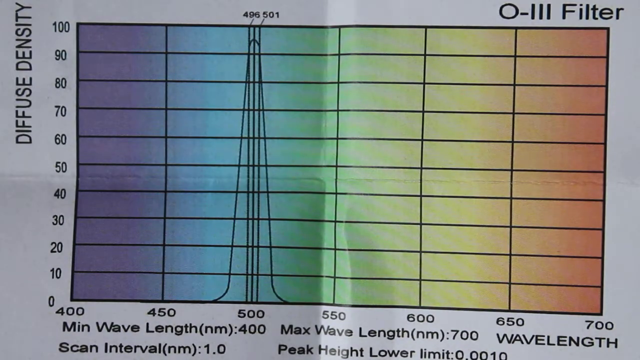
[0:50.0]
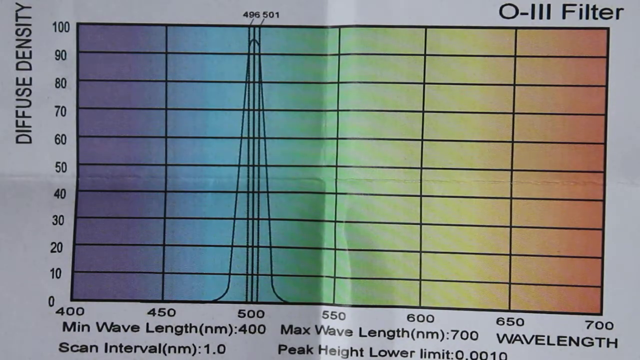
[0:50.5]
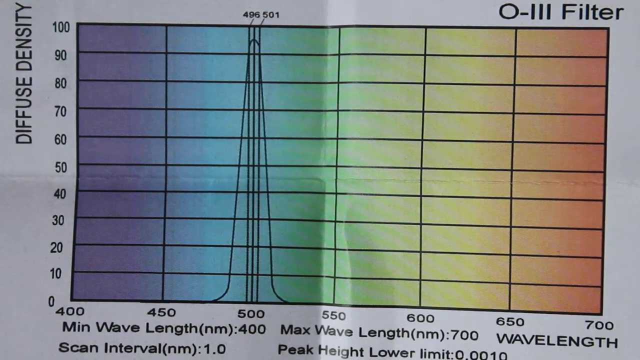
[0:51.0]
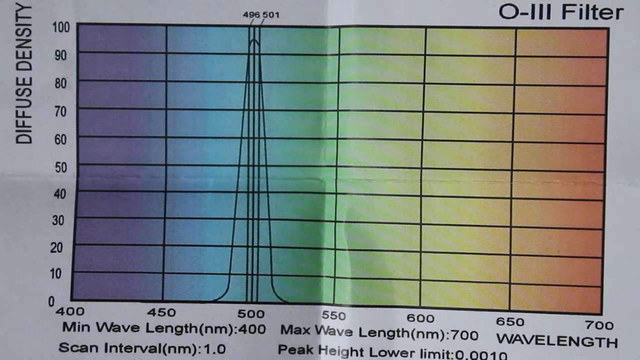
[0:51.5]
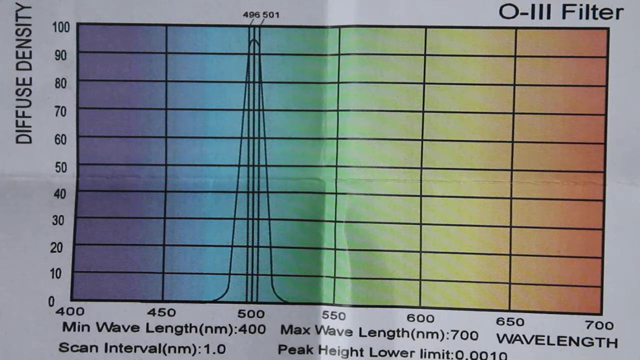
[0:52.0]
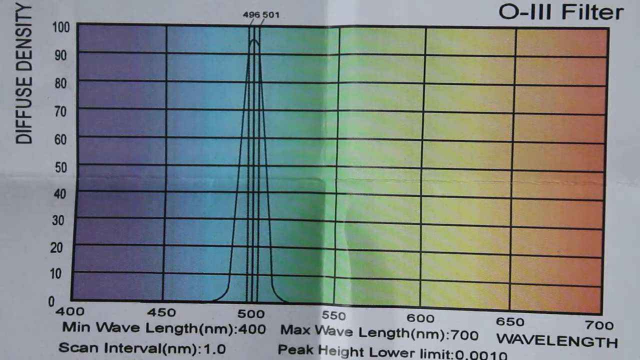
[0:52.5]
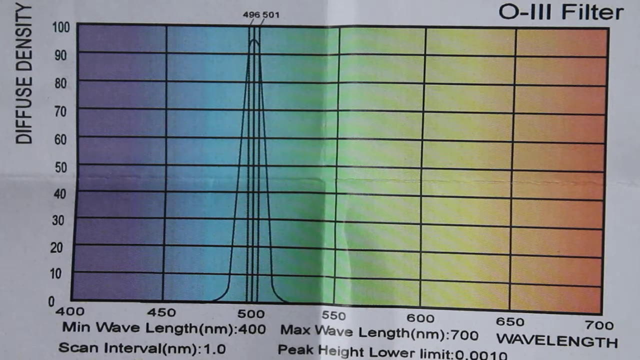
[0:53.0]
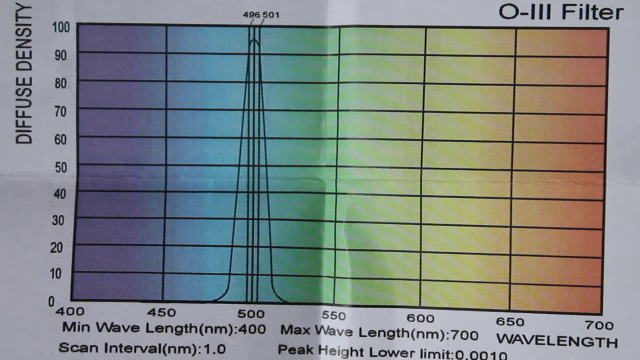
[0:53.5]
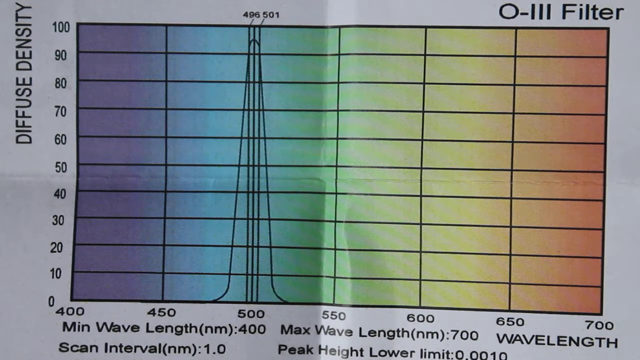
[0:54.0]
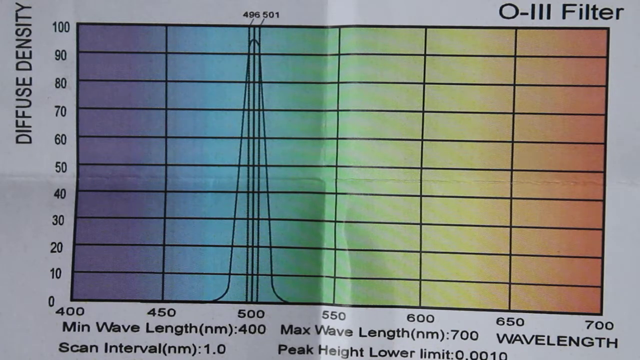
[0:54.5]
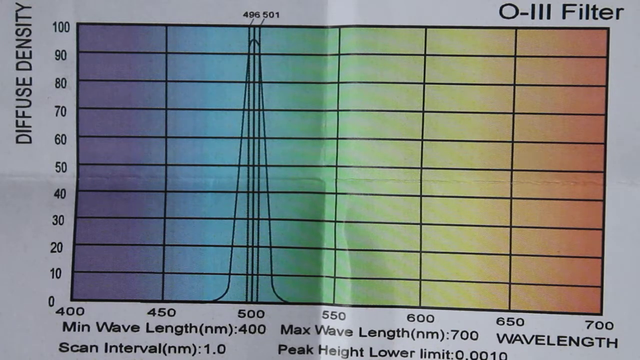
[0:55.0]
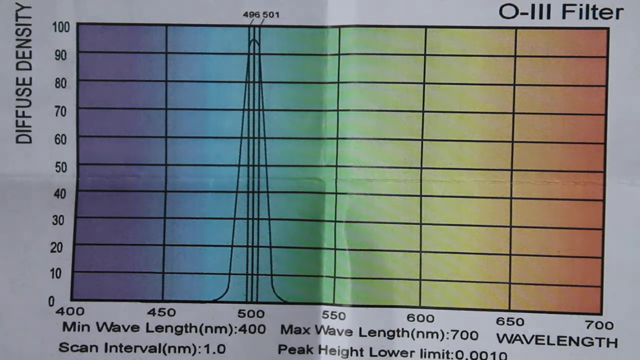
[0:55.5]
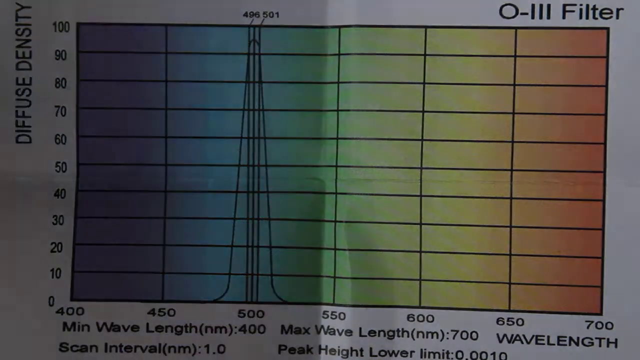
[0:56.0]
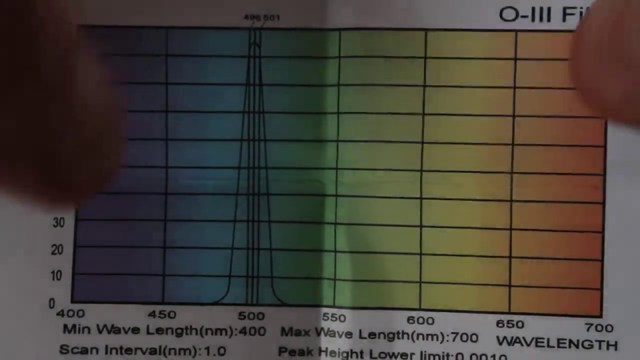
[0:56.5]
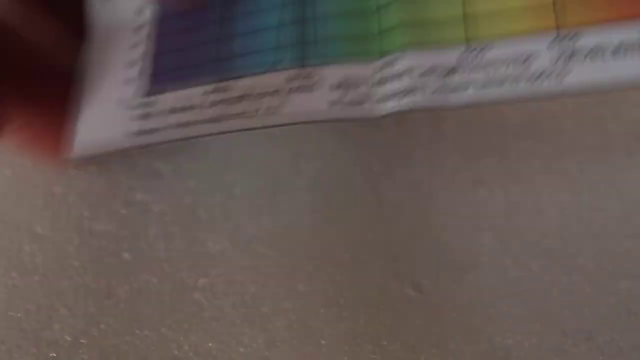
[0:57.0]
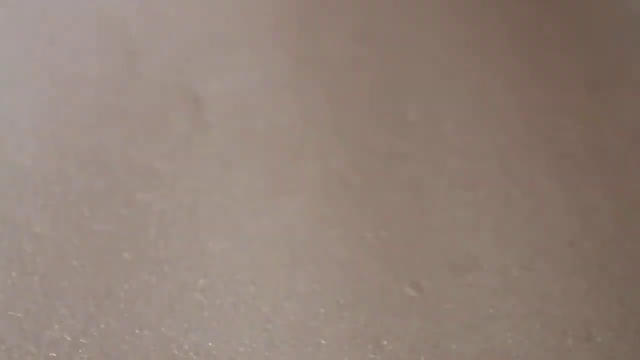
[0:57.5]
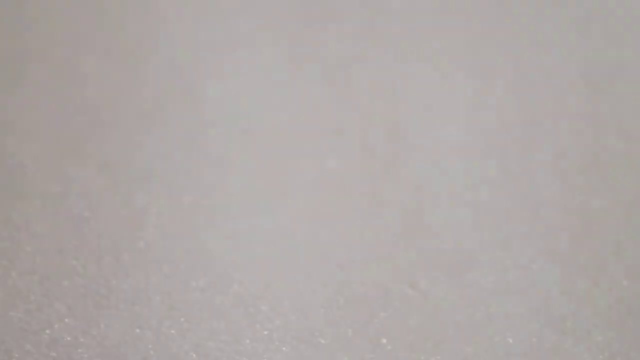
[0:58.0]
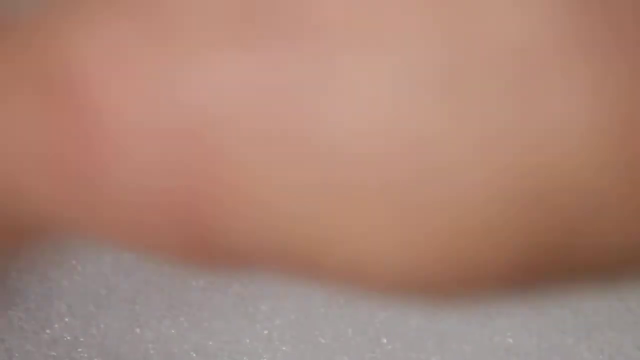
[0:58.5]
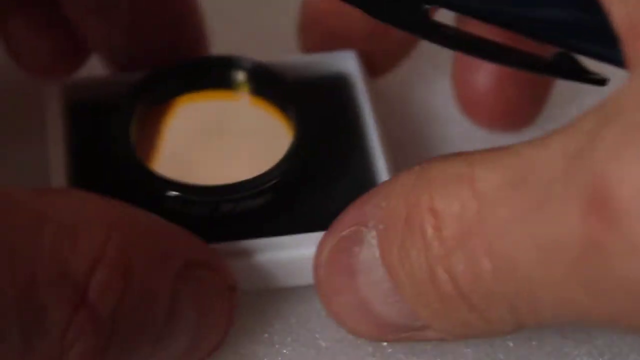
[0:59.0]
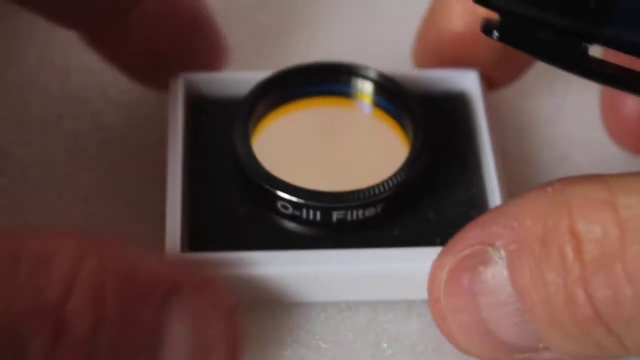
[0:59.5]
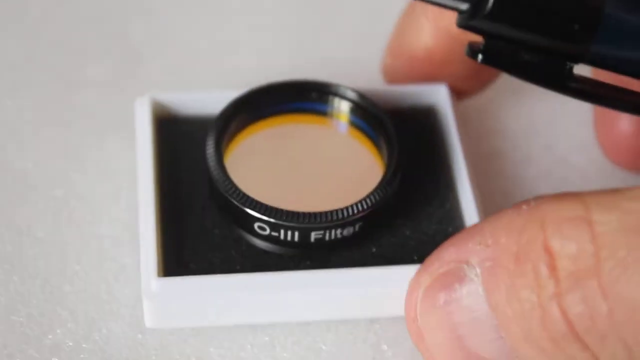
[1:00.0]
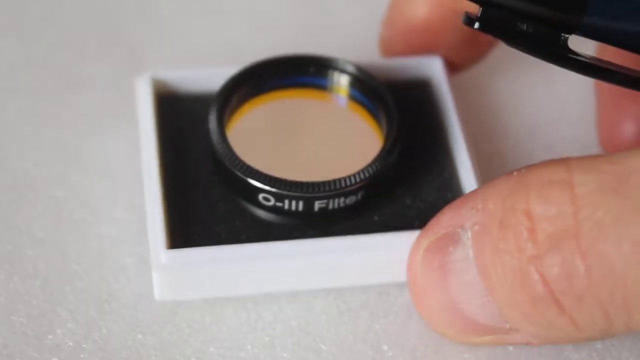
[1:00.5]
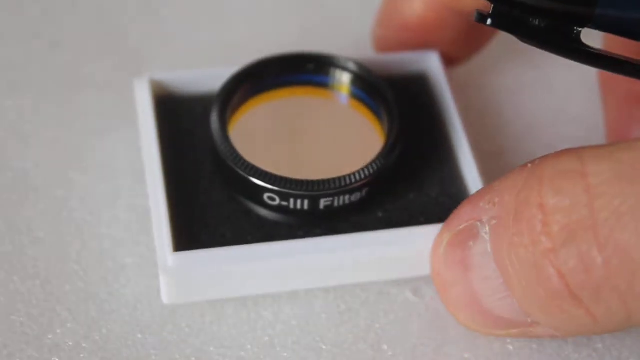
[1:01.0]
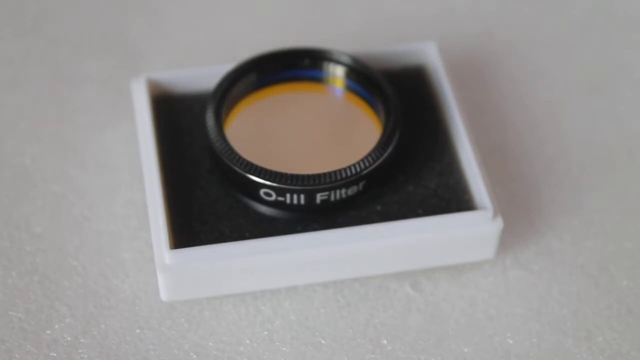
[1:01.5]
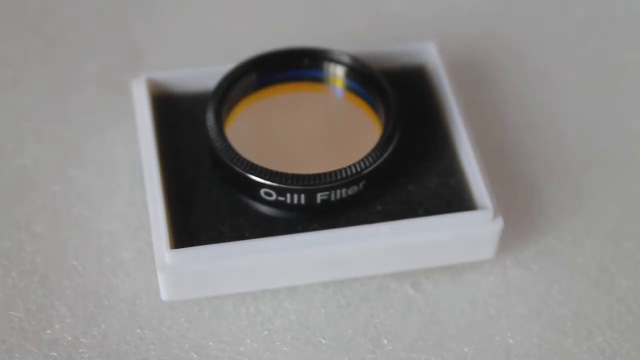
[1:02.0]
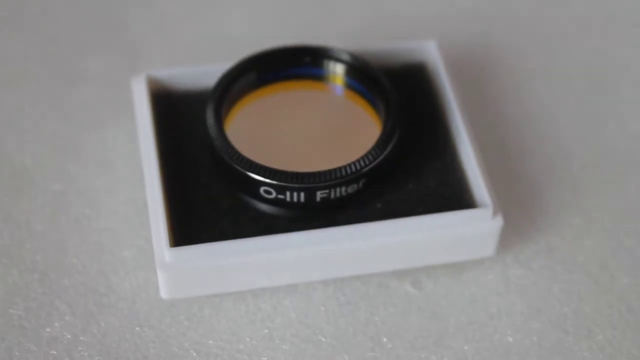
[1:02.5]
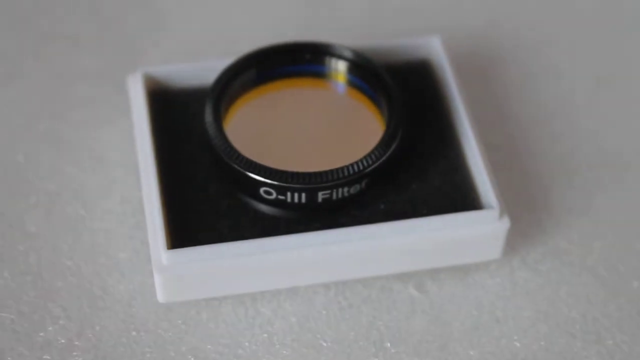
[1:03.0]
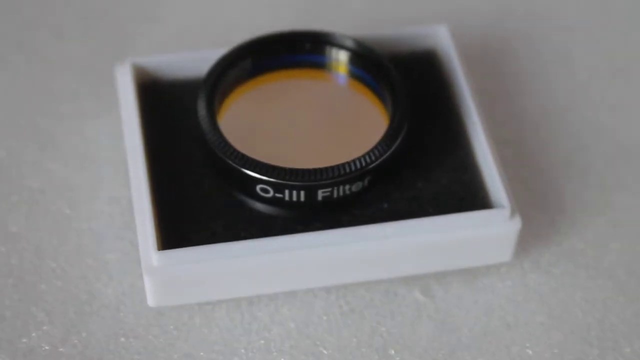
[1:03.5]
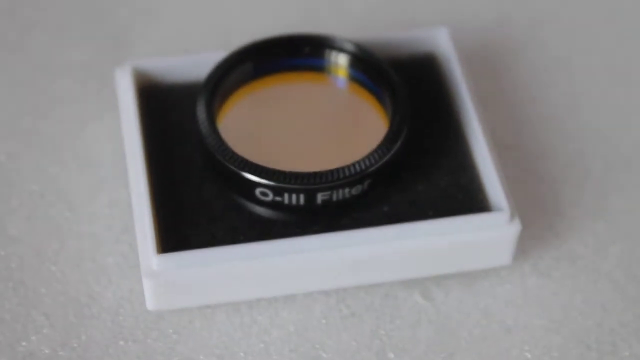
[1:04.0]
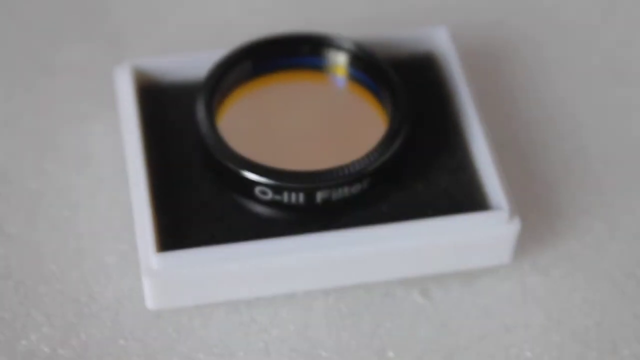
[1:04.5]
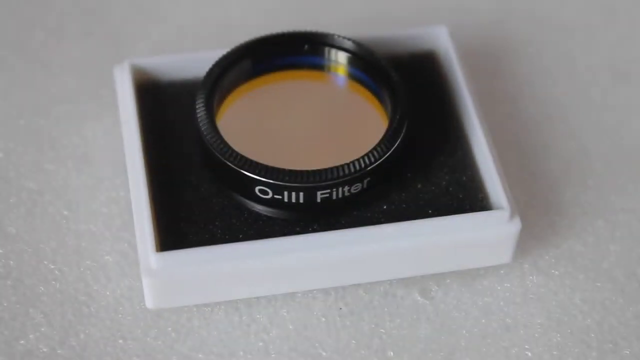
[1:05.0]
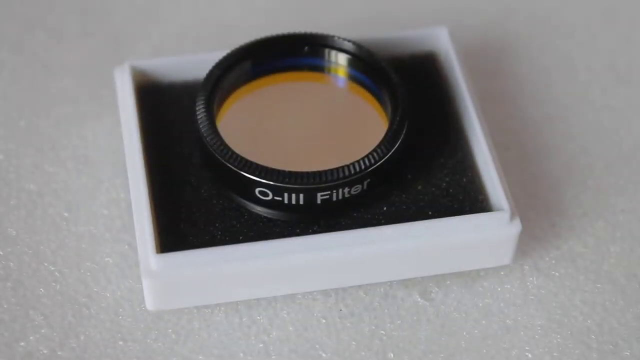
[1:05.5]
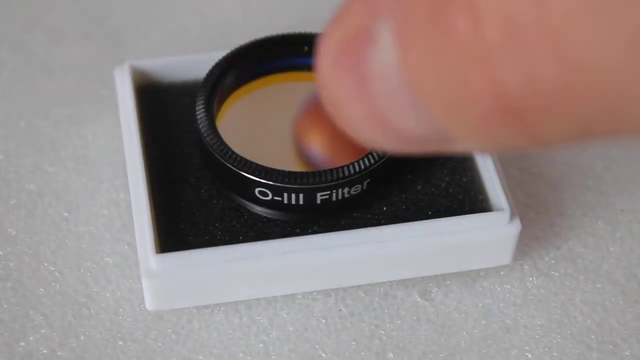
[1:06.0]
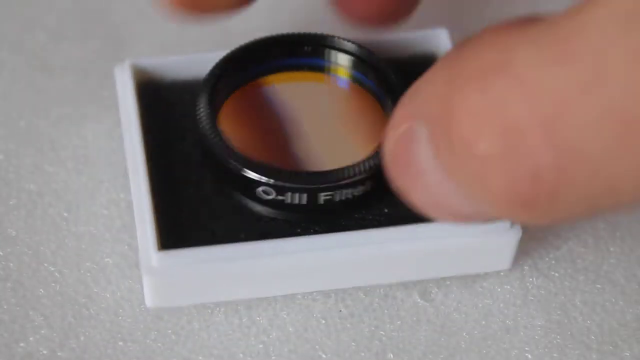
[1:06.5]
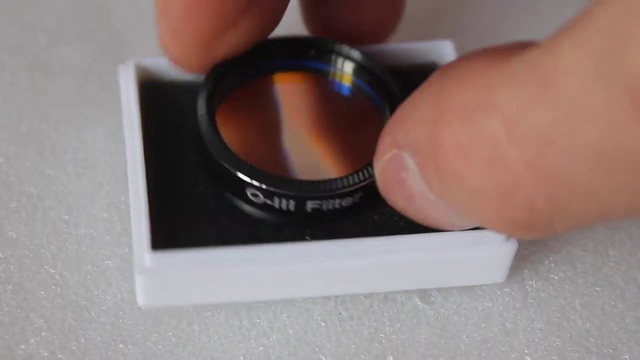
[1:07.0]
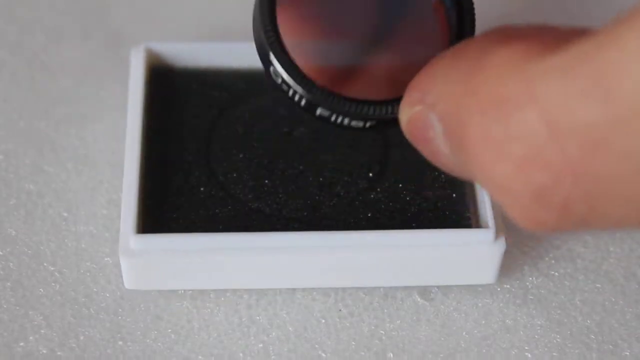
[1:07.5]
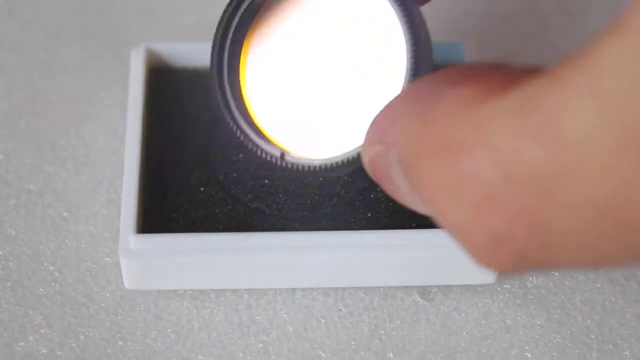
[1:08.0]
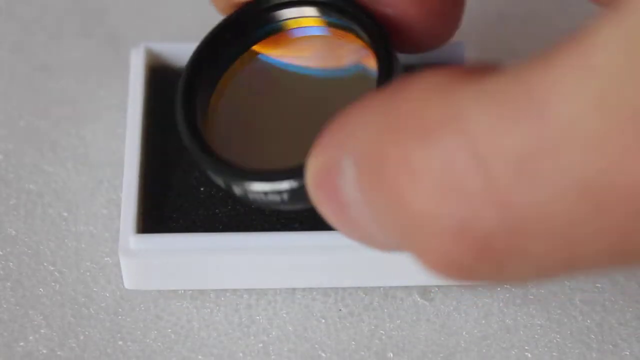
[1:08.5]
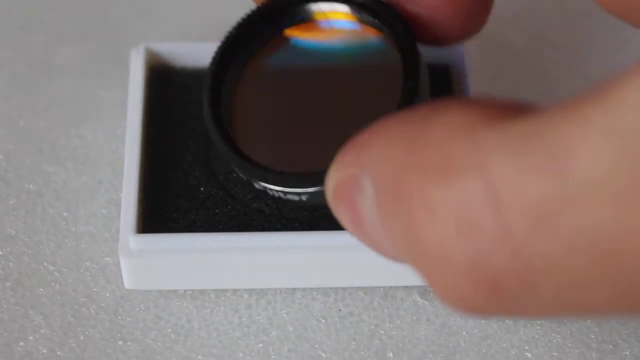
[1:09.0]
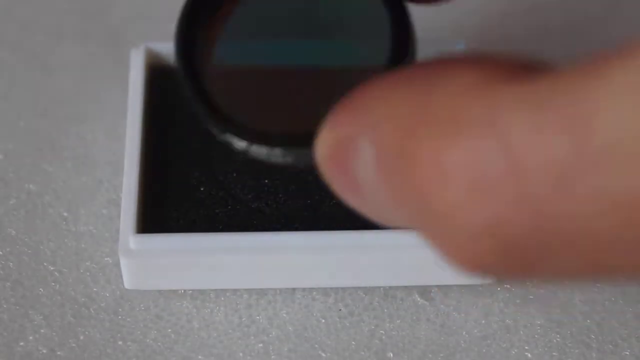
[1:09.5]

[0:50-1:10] The person continues pointing the pen at certain angles of the graph, which stays exactly the same: "O-LLL filter" in the upper right-hand corner, "diffuse density" on the left side from top to bottom with numbers from 0 to 100 in increments of 10, and the wavelength on the lower side from left to right with numbers from 400 to 700 in increments of 50. The person then removes the paper with the graph and places a small white square with a cylinder, with a round object in the middle that looks to be a magnifying glass. The side of the circular object says "O-LLL filter". The person grabs the circular object and moves it at different angles; the middle of it appears to be glass, judging by its reflection.